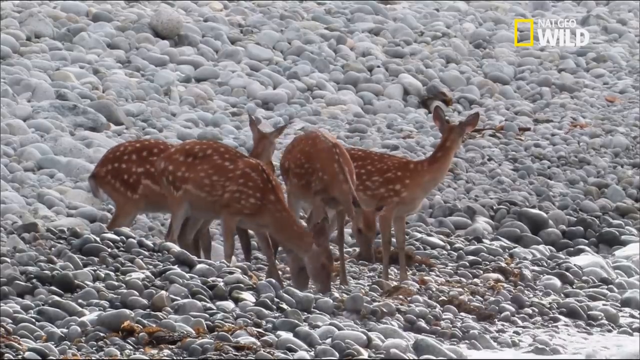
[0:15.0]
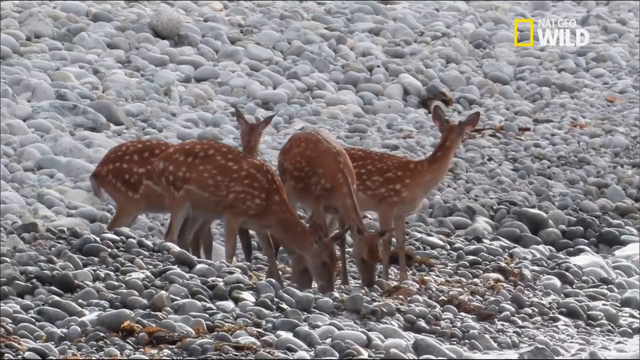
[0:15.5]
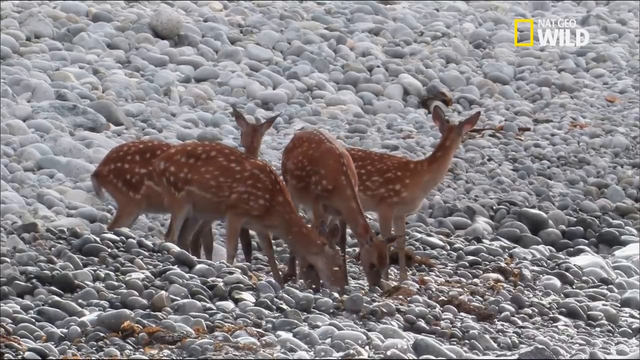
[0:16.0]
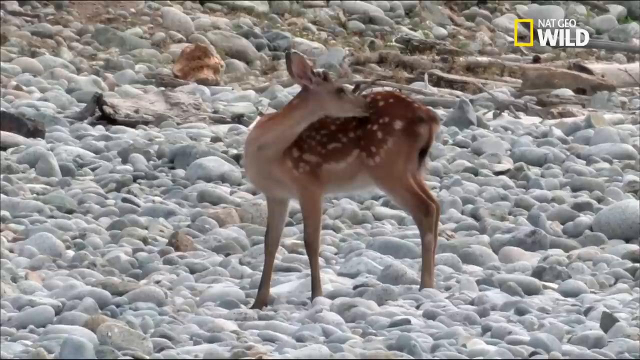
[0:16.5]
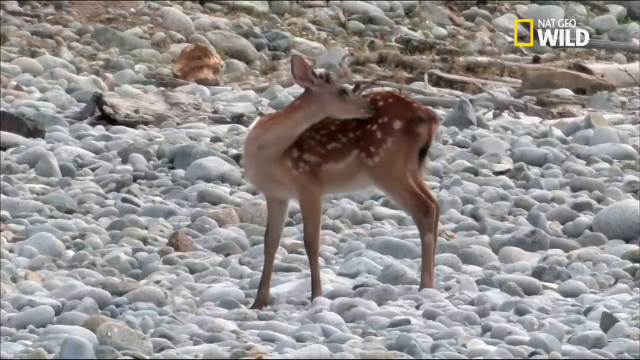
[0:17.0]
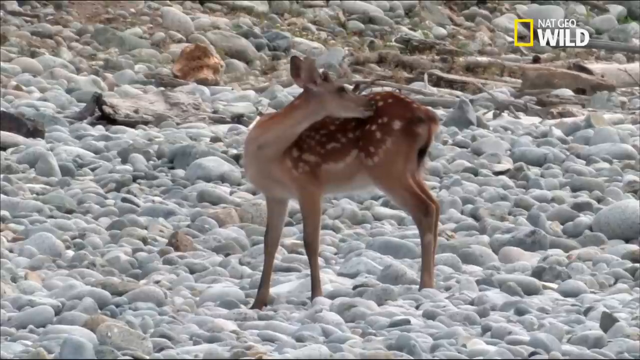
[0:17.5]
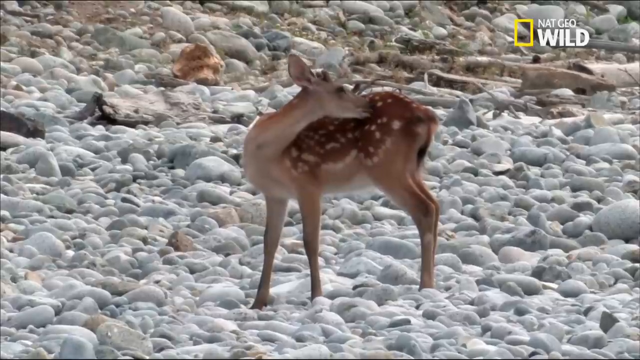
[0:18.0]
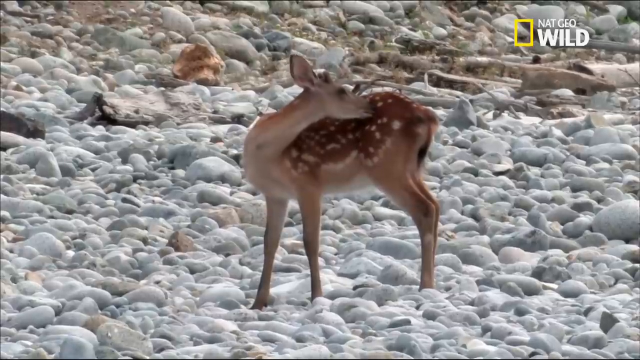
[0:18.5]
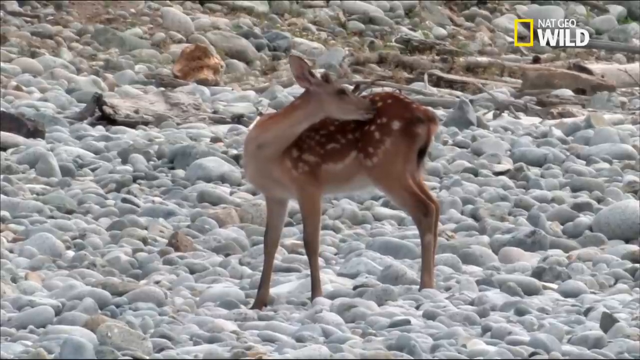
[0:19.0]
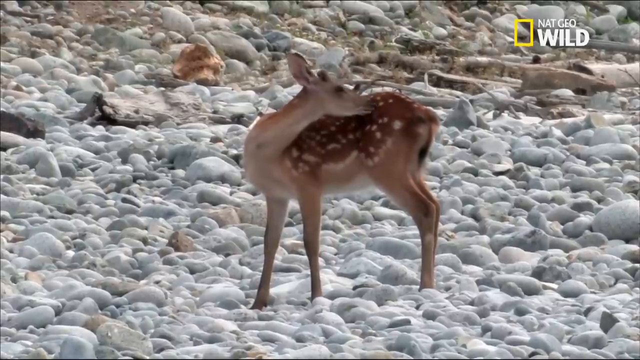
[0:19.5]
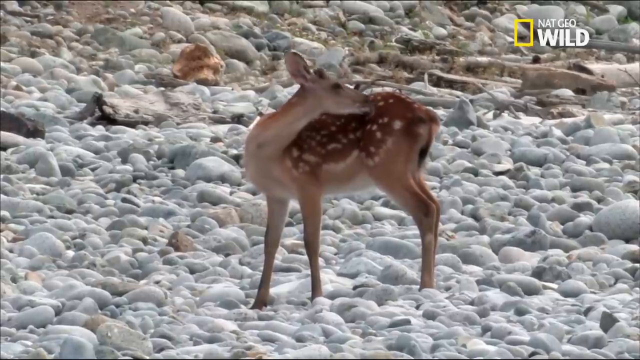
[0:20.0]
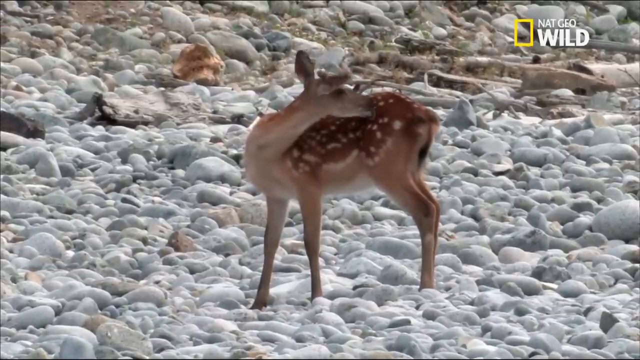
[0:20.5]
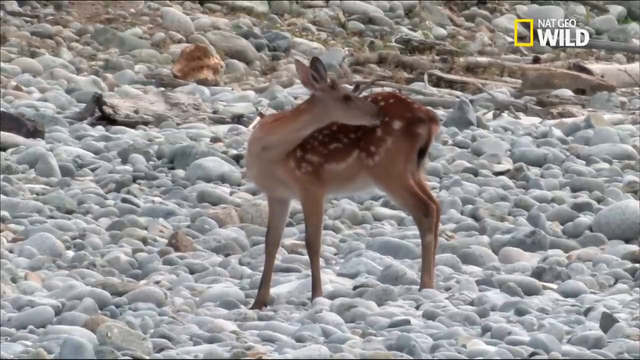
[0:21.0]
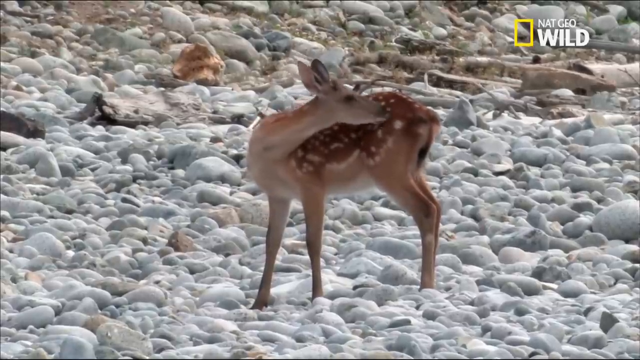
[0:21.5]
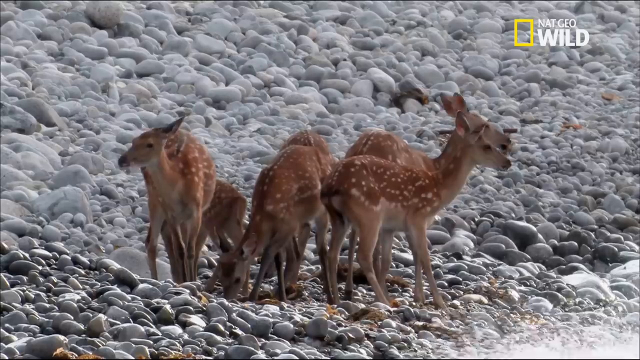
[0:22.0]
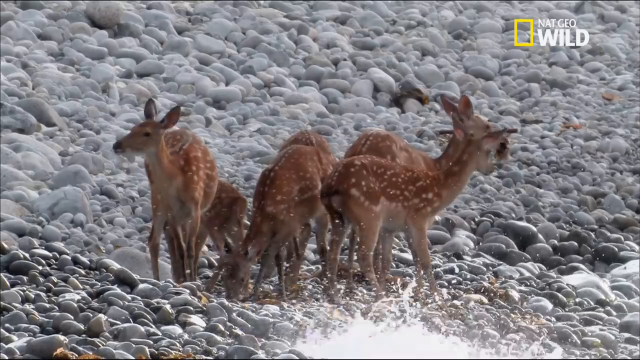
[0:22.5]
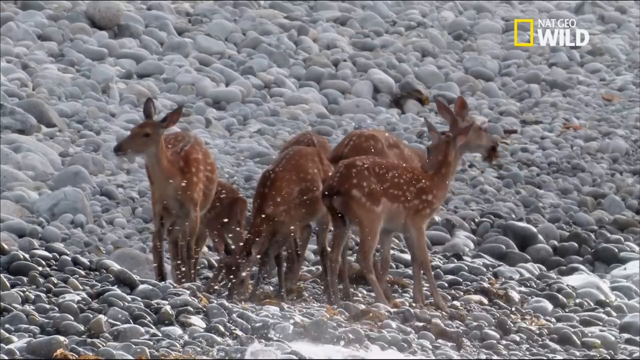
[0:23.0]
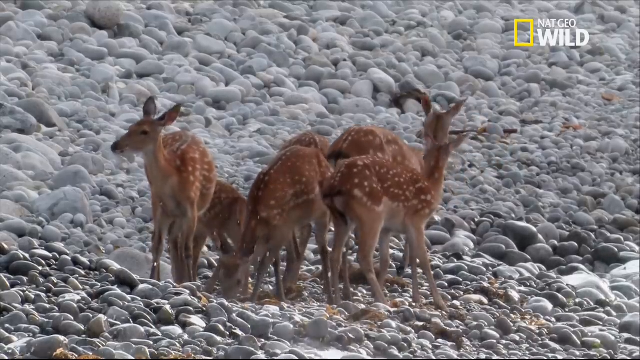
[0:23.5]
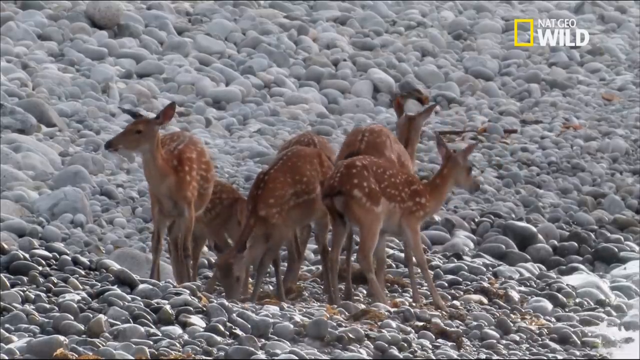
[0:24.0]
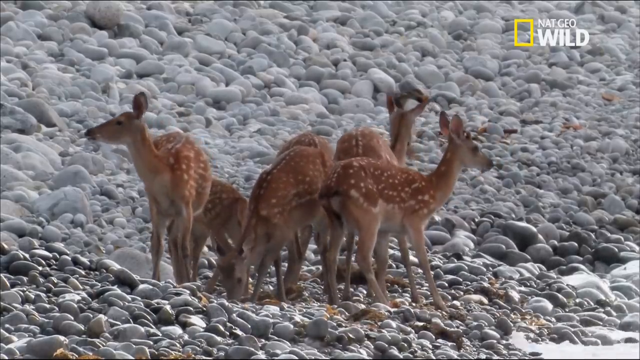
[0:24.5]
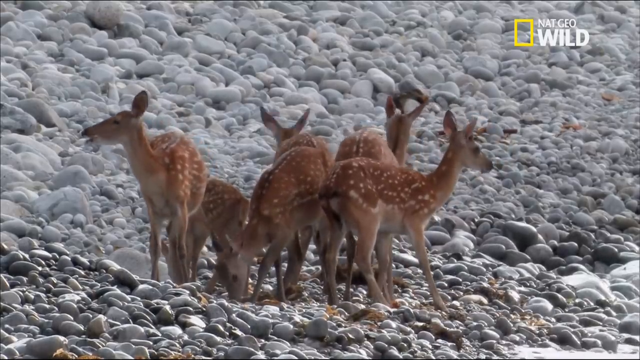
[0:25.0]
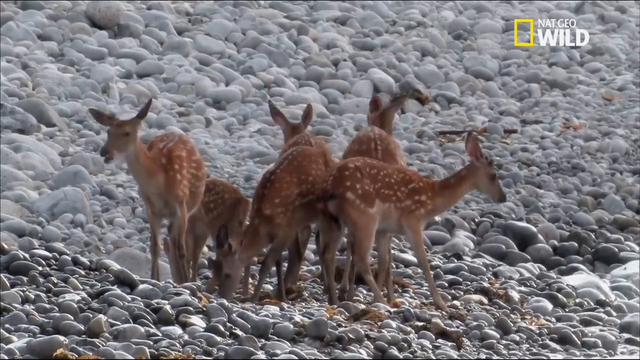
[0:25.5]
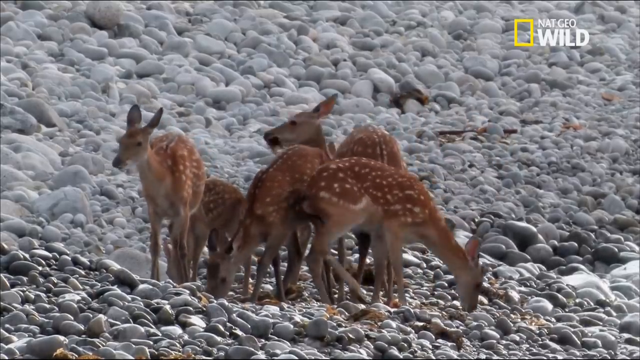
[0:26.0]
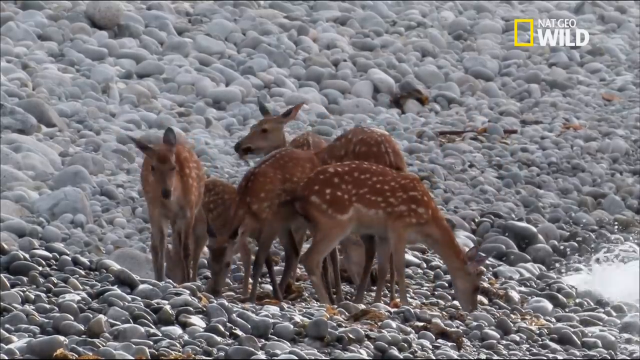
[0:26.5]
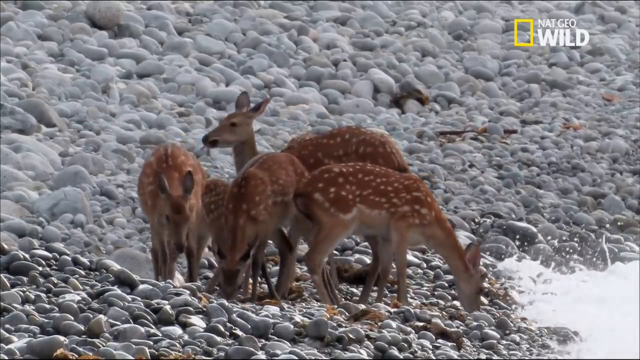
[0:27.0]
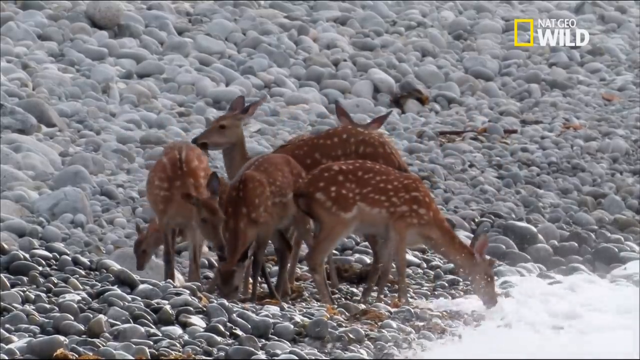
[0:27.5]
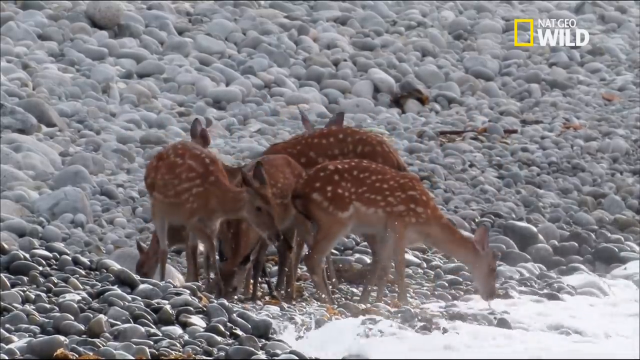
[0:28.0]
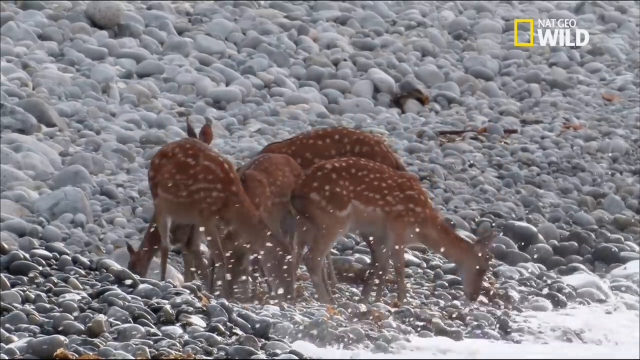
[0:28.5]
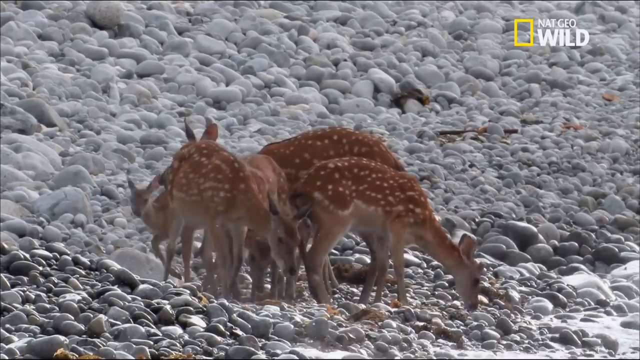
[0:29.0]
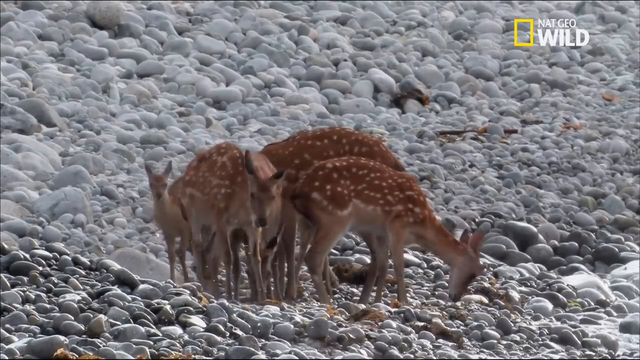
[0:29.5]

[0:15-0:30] The deer continue looking for food on the shoreline, standing huddled together on the white rocks. They appear to be eating some sort of vegetation, eating grass off the ground while also looking around them. On the right of the screen, waves of water keep splashing up on them; the water looks white rather than blue. Next, a deer stands facing left with its head turned back toward the right, seemingly grooming itself, either itching or biting something off its body. Behind this deer, another small animal seems to be sitting in the background.